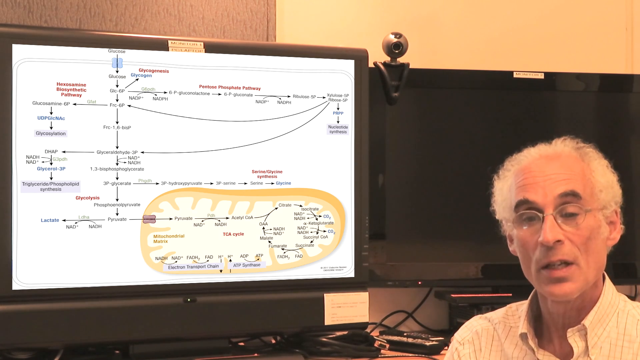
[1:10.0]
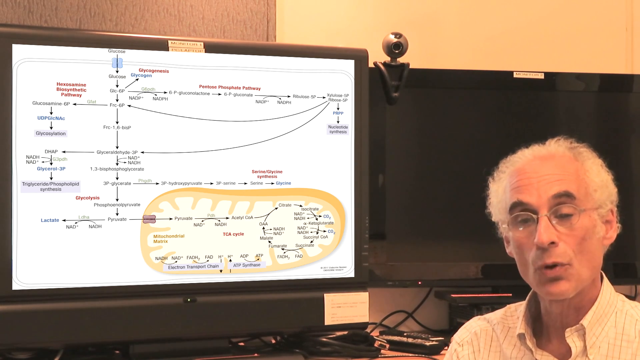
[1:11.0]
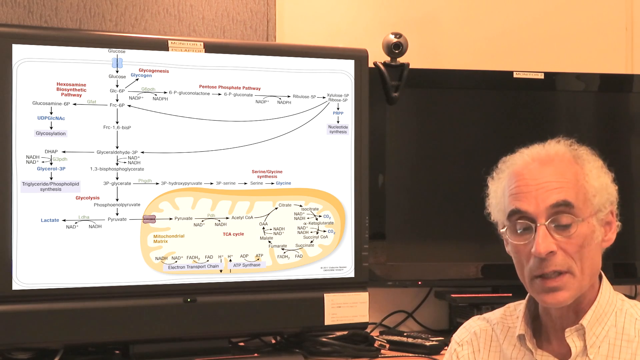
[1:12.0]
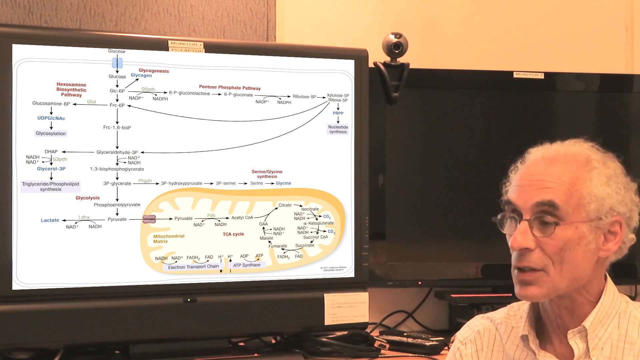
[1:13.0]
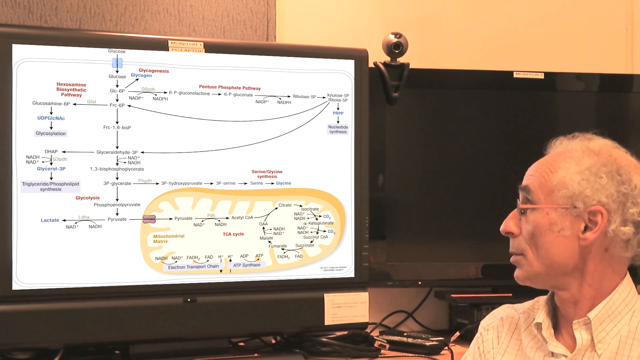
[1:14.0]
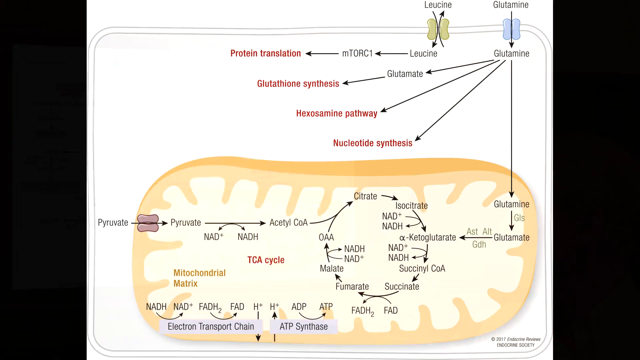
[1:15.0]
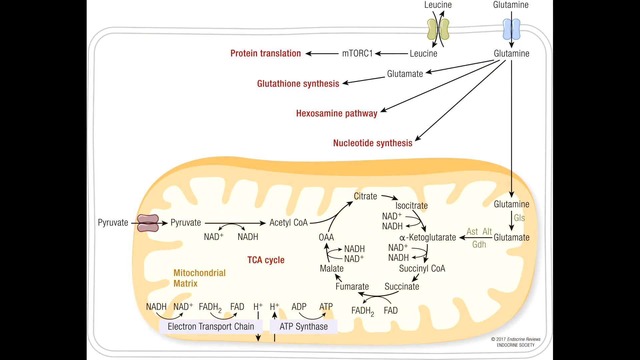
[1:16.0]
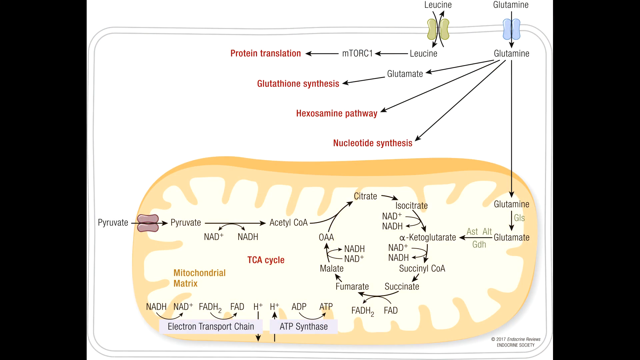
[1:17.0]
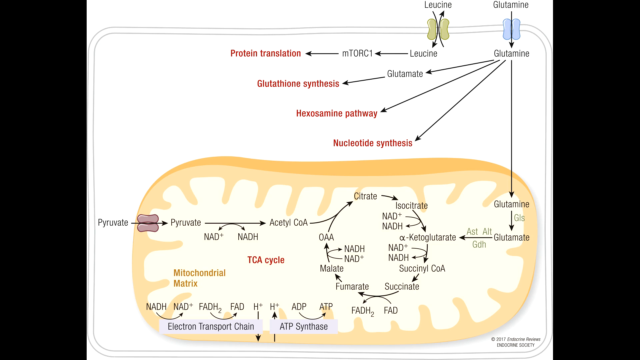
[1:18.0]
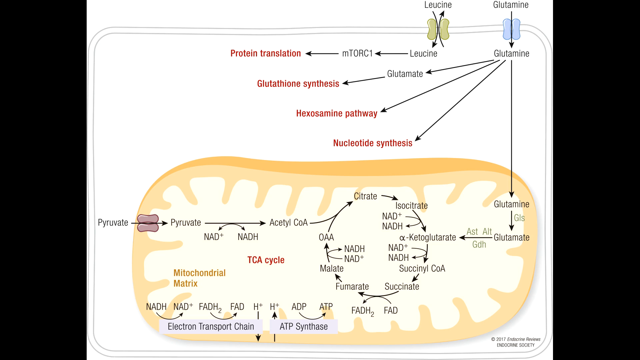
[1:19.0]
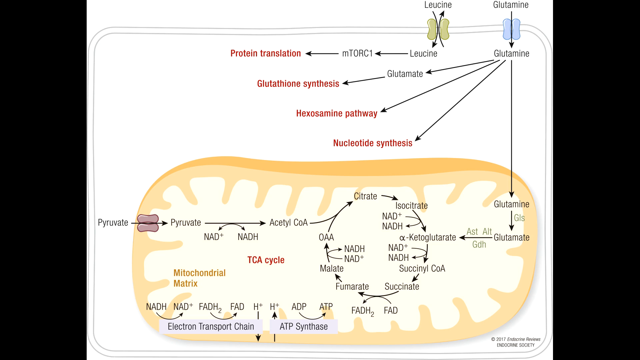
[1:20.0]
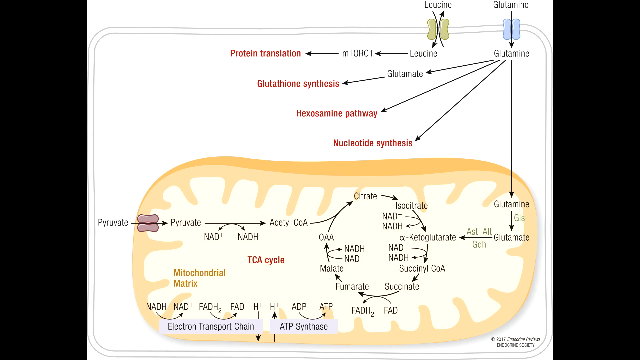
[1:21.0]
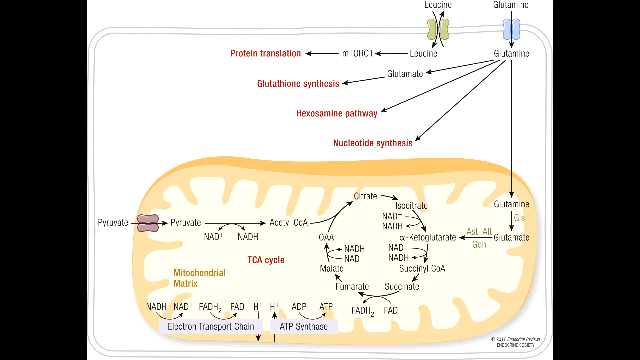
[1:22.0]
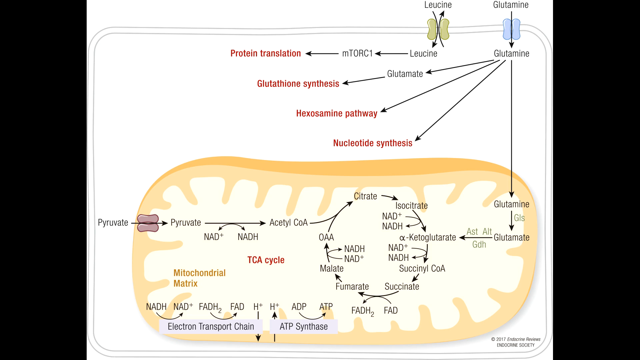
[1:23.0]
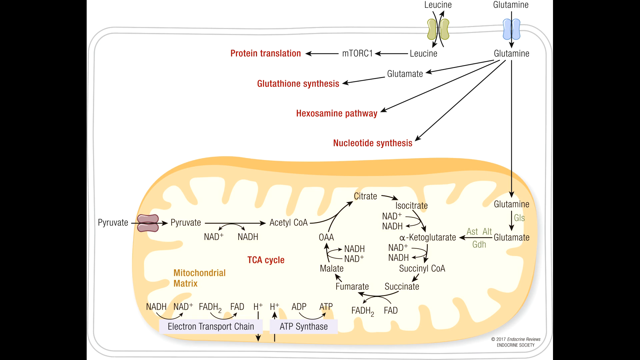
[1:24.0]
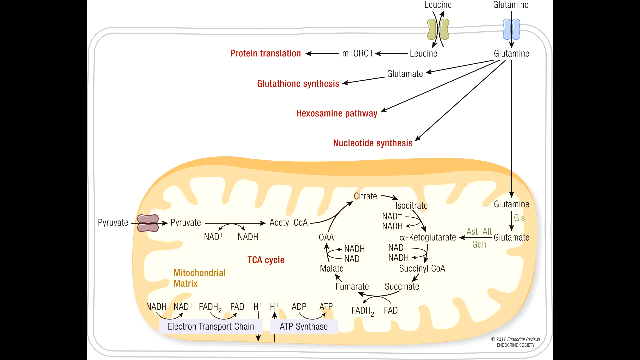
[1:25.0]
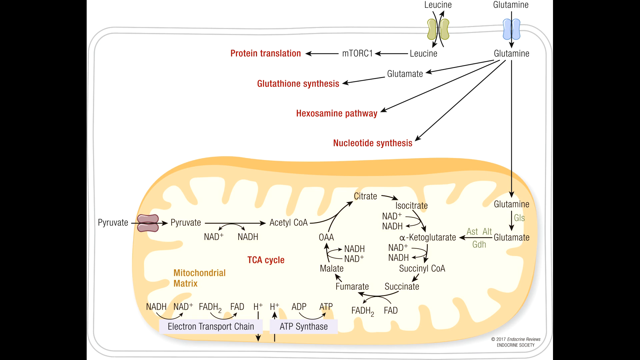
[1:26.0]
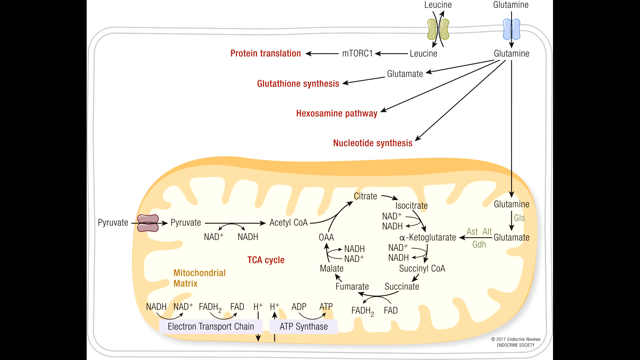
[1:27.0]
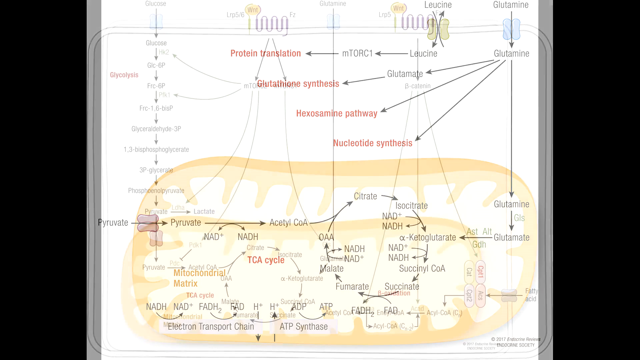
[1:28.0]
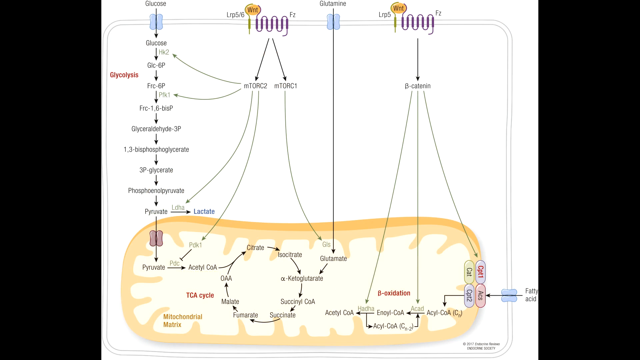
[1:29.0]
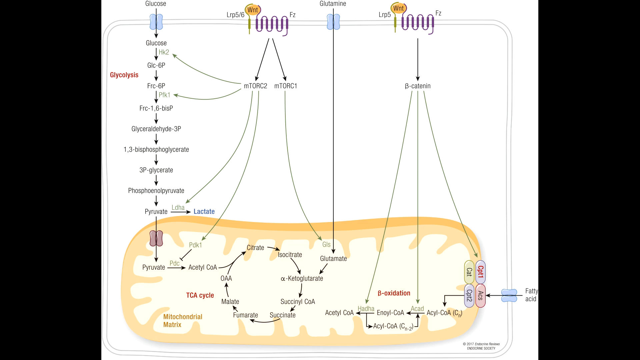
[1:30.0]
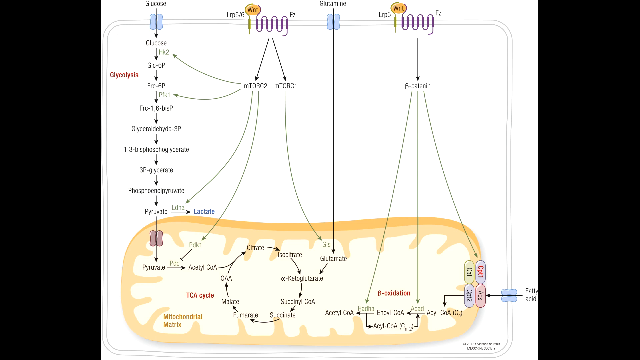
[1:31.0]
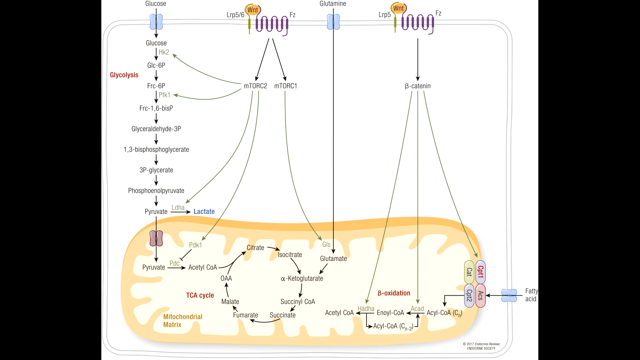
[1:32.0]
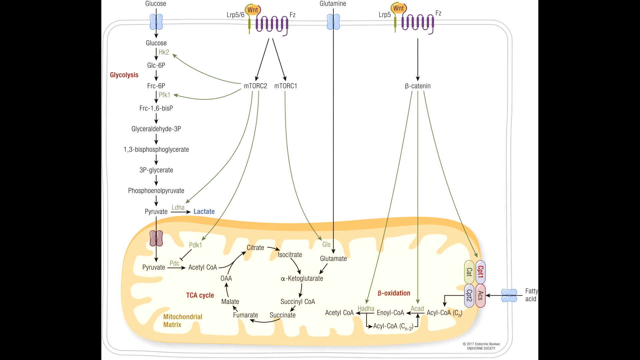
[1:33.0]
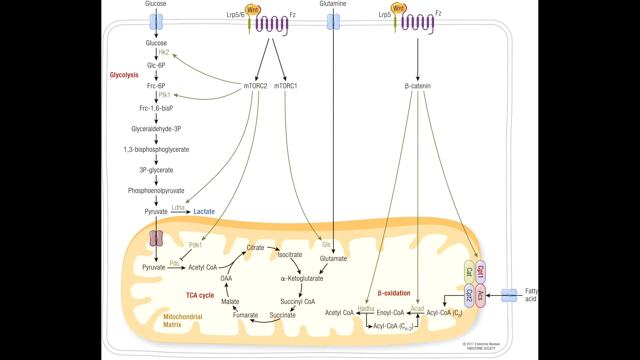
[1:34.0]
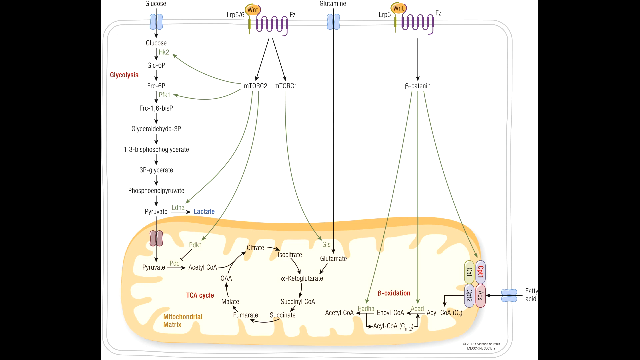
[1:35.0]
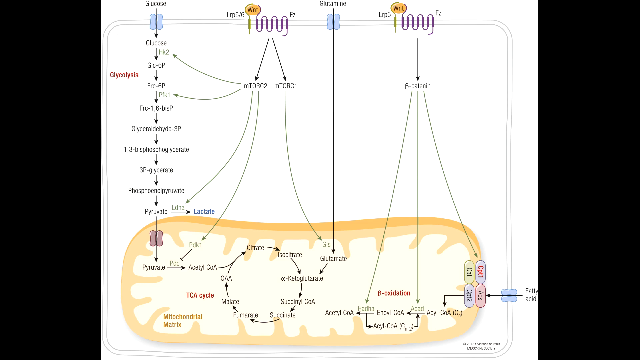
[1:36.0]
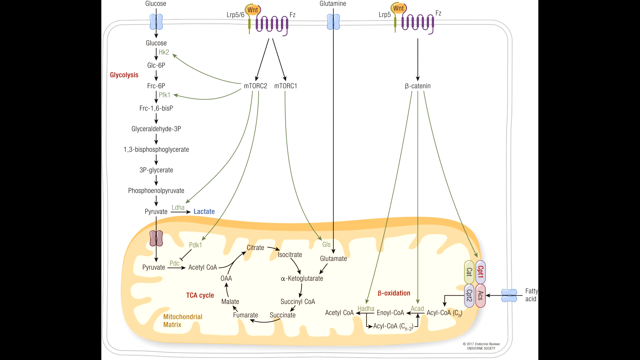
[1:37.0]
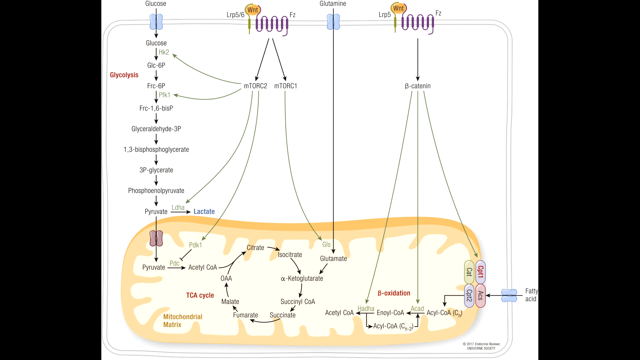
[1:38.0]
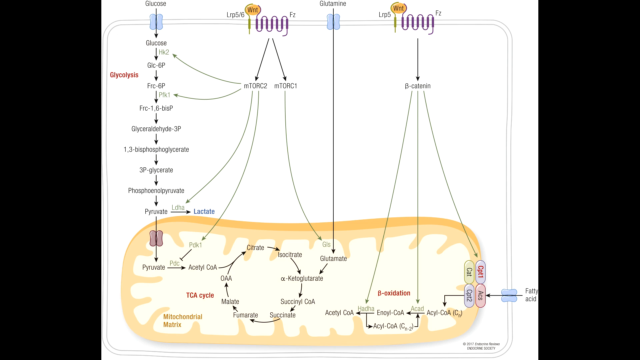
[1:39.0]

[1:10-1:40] A man, approximately in his late 60s, with a very thin bone structure in his face, pale white skin, dark eyebrows and white hair, bald on the top of his forehead and a bit long on the sides and back, speaks to the camera without ever smiling. He has a rather large nose and framed glasses and wears a collared shirt, of which only the tops of his shoulders are visible. A screen to the left has a diagram illustrating a scientific process. As he talks, he looks to the right, showing the left side of his face. The video then goes back to a close-up image of the TCA cycle: in the upper right corner, "glutamine" has a flowchart arrow down to glutamine again, leading into what looks like the TCA cycle and the mitochondrial matrix. Off to the left, red text reads "protein translation", with "glutathione synthesis" below it, followed by "hexosamine pathway" and then "nucleotide synthesis".